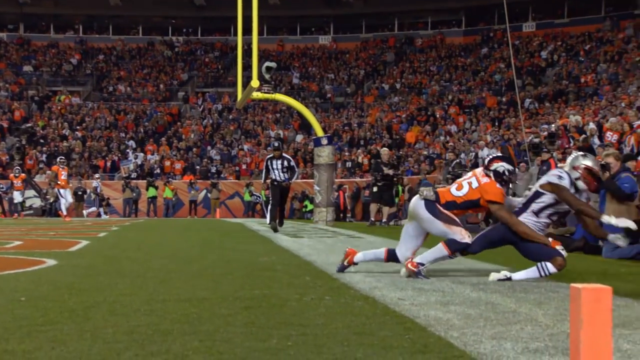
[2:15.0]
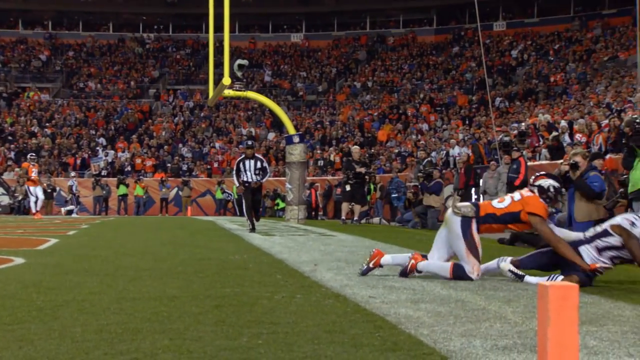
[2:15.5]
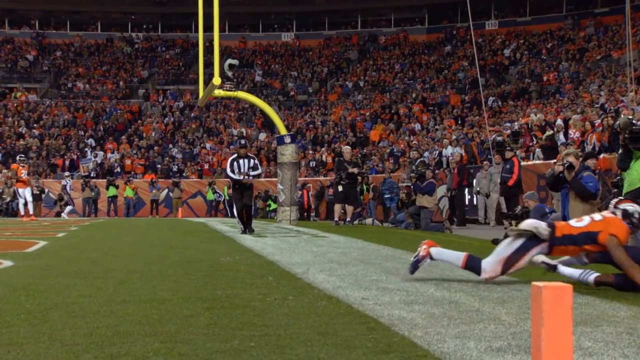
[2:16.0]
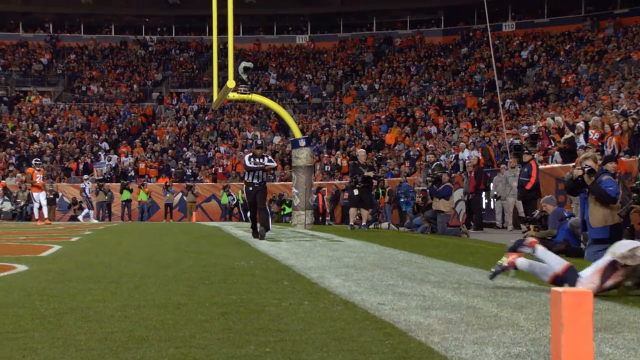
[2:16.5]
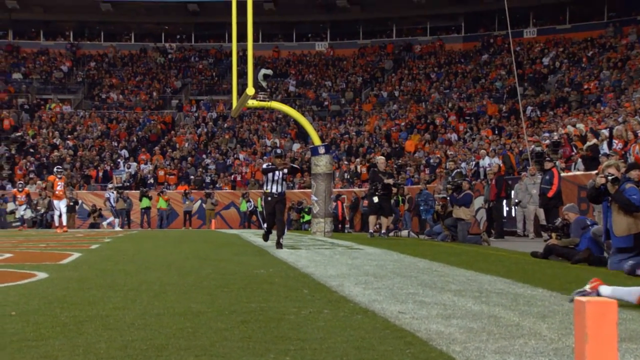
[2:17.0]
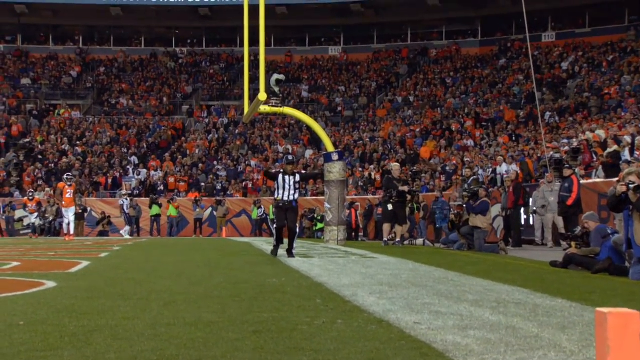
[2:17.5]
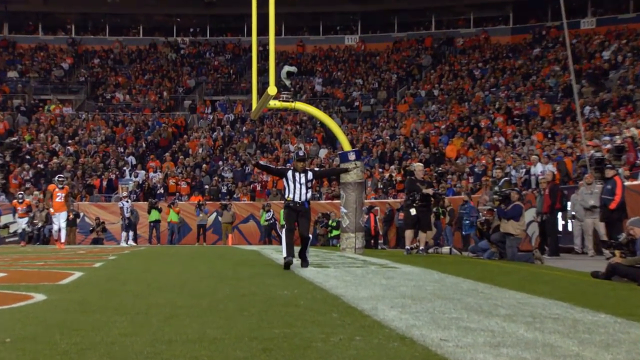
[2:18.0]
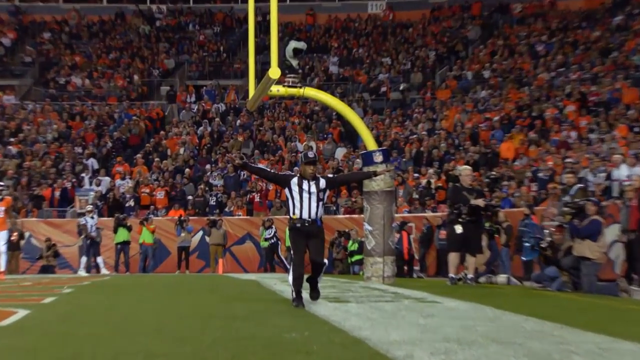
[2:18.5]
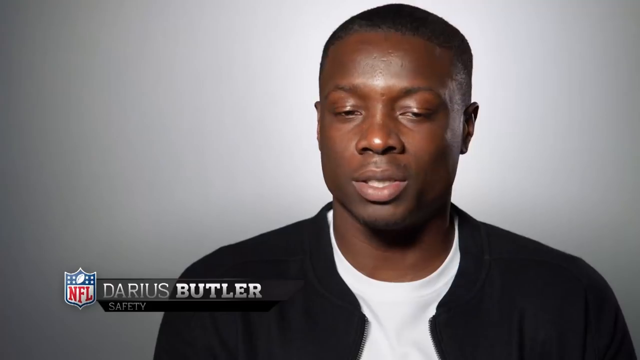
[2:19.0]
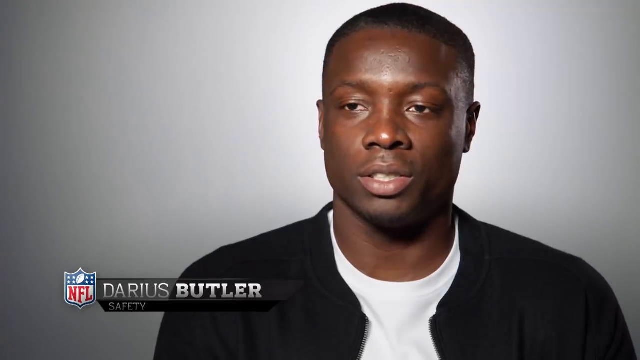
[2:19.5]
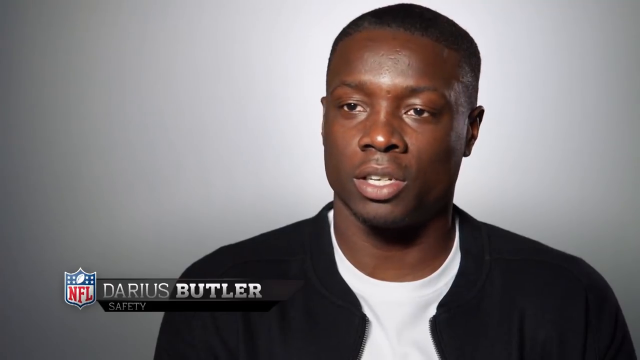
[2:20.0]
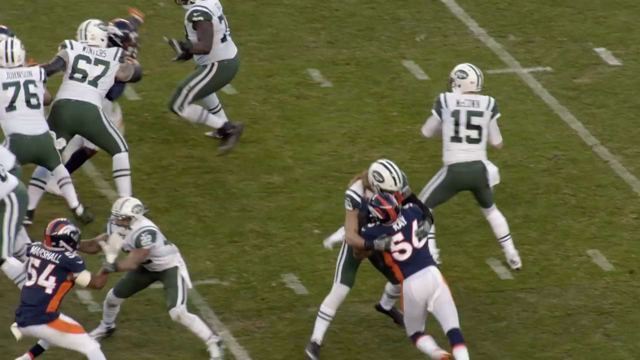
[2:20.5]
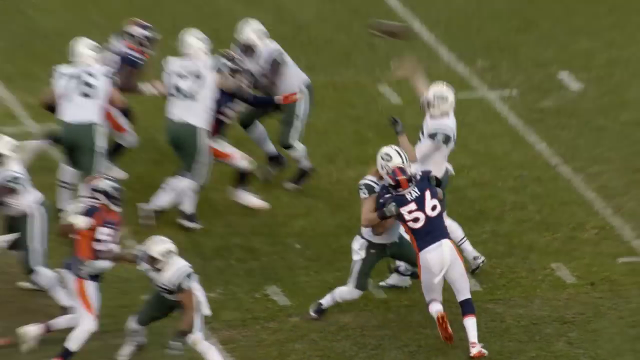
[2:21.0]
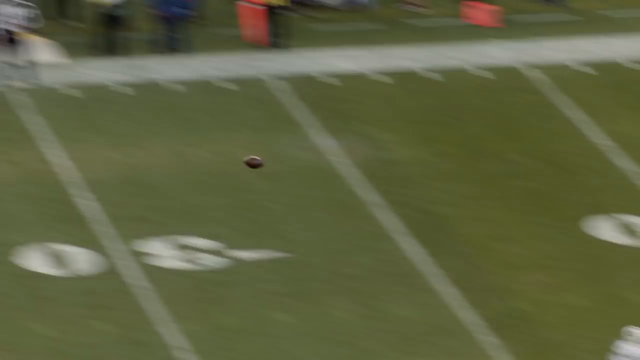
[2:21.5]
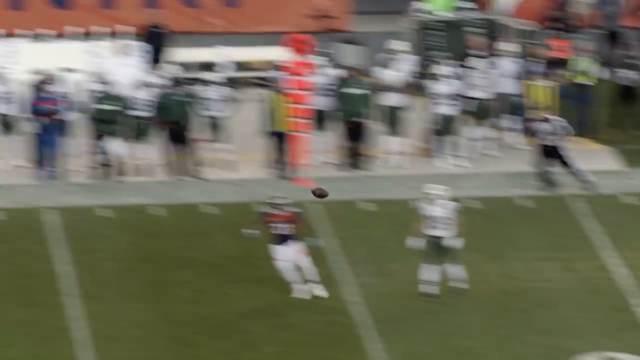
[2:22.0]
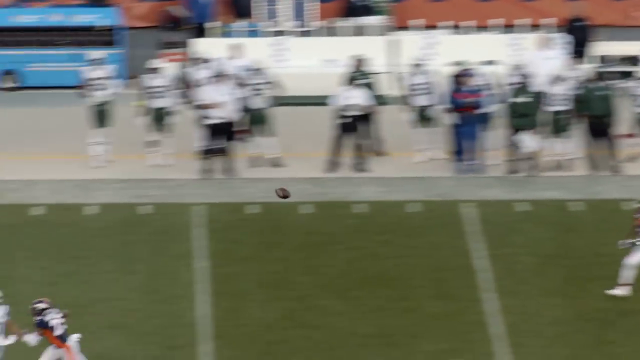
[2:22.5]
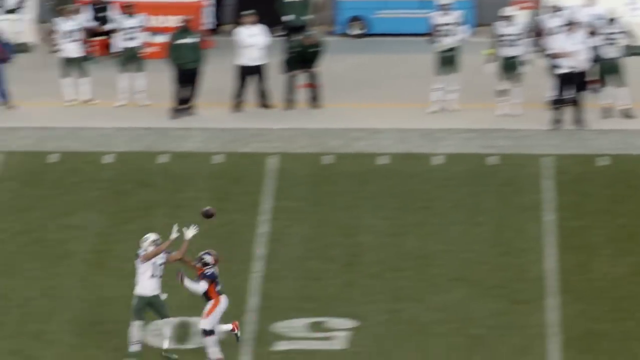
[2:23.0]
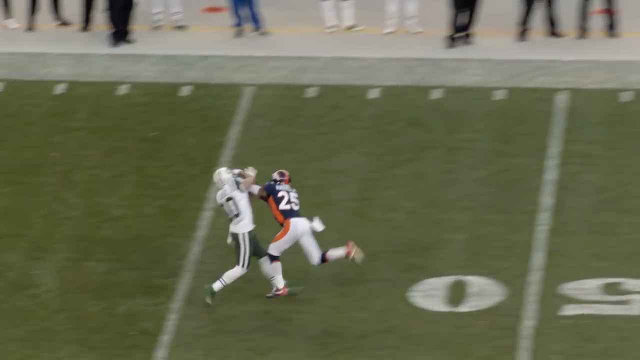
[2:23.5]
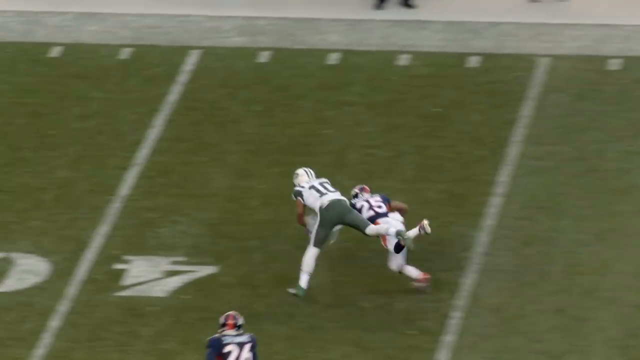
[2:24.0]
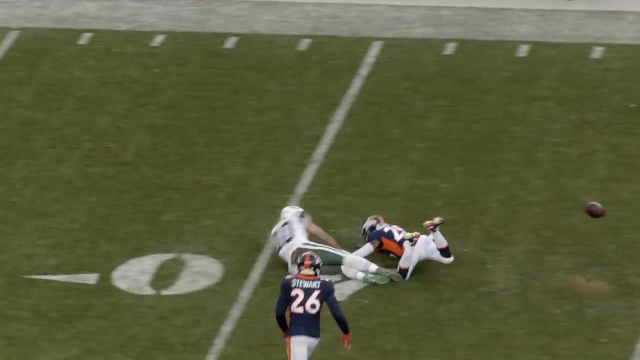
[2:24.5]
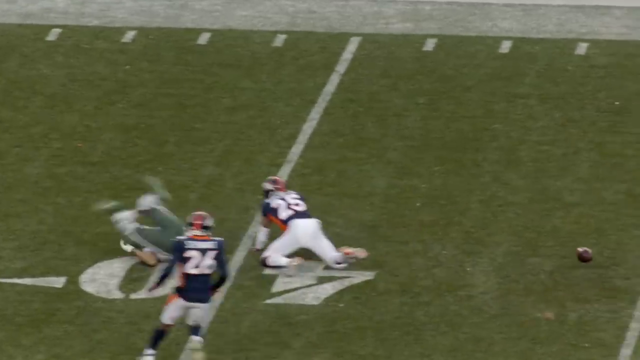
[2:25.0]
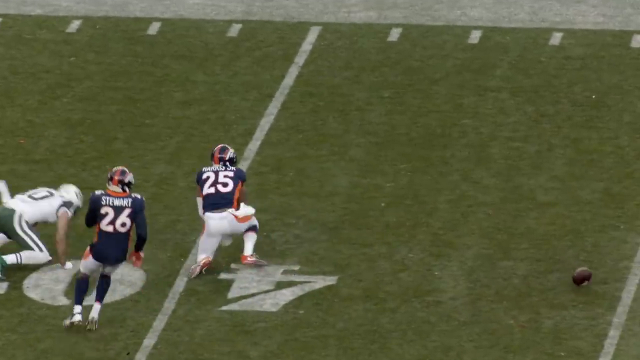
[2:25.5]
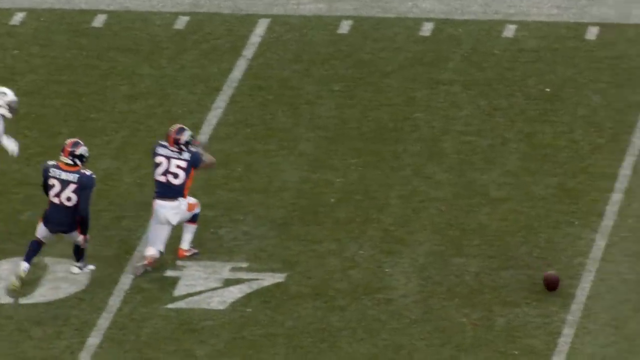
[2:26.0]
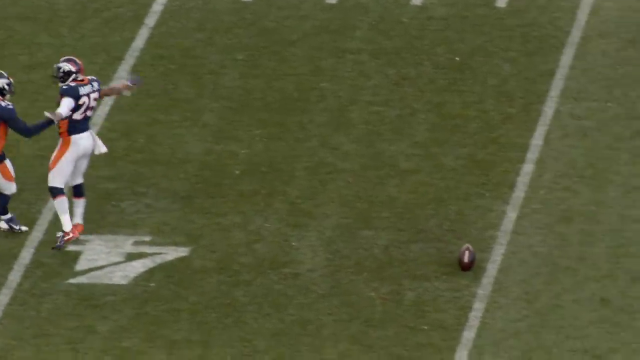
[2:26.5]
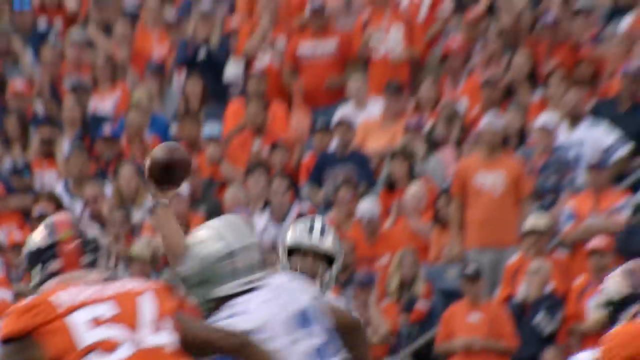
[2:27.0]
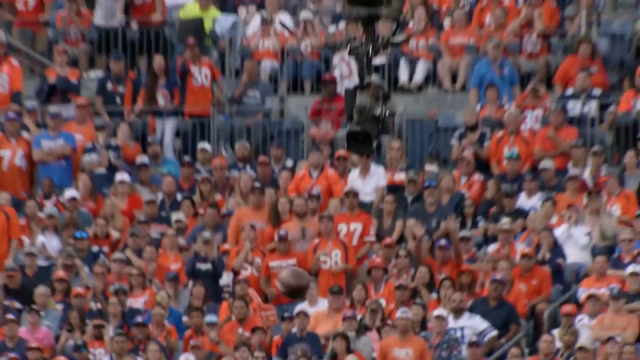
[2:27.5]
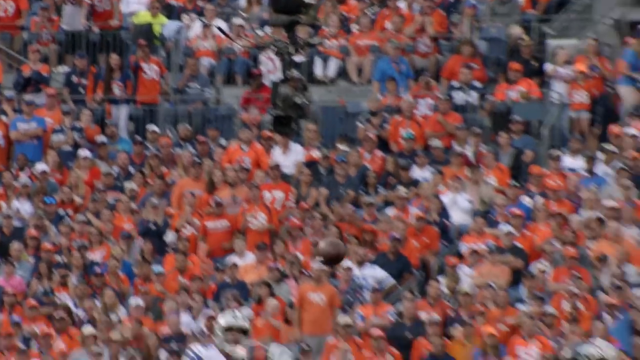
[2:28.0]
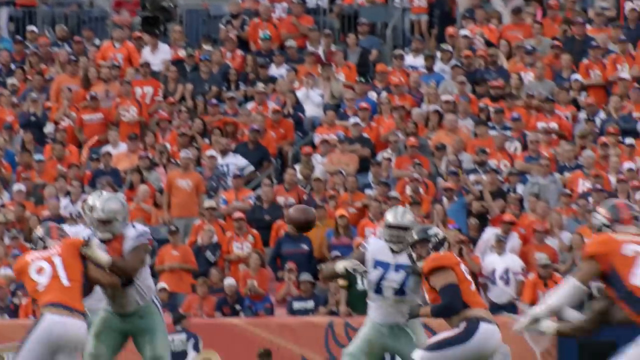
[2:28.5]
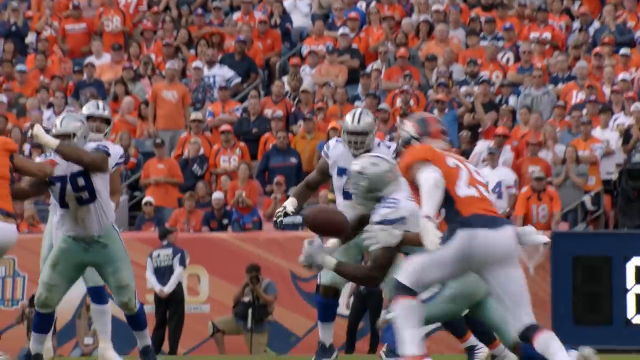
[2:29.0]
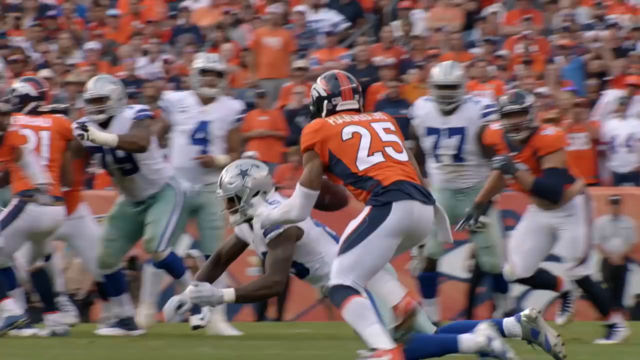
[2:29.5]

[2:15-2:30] In slow motion, Chris Harris Jr. and the receiver fall out of the back of the end zone, and a referee makes a no-touchdown or out-of-bounds signal, his arms starting kind of crossed and then going parallel. The video cuts to another NFL player talking into the camera, with "Darius Butler" on screen, "safety" underneath and the NFL logo next to his name. He is a Black man with very short, neatly cut hair, wearing a white t-shirt under a black jacket, apparently talking about Chris Harris Jr. Next is footage of the Jets playing the Broncos, in which Harris Jr. interrupts a pass, then a clip of Harris Jr. against the Cowboys in which he looks like he is going for an interception.